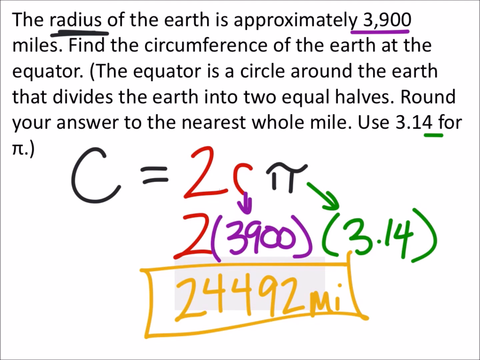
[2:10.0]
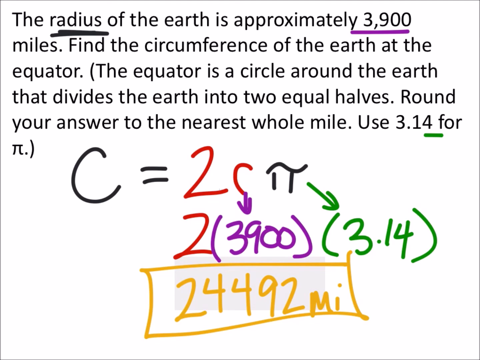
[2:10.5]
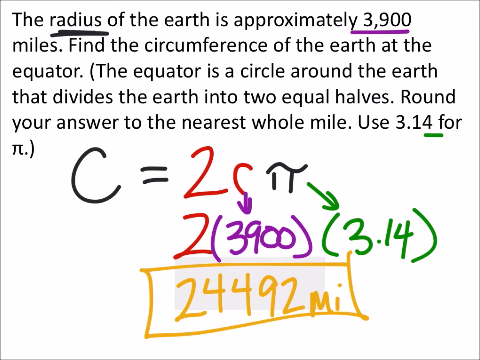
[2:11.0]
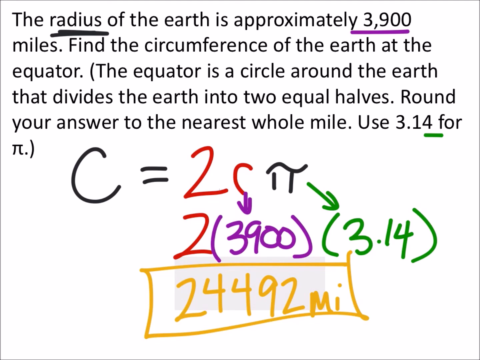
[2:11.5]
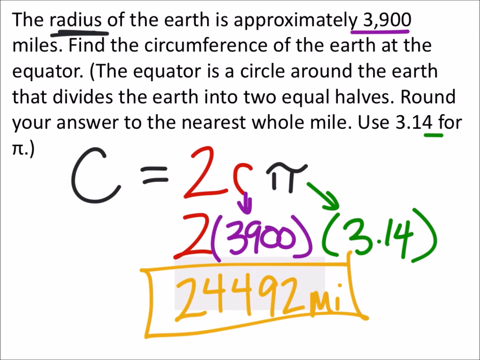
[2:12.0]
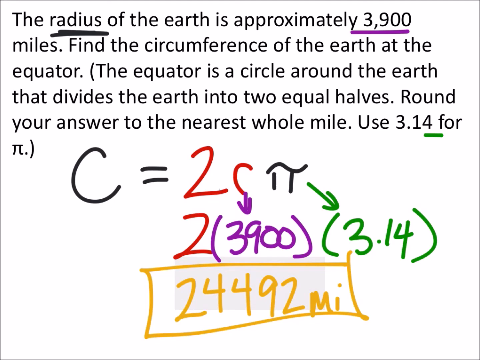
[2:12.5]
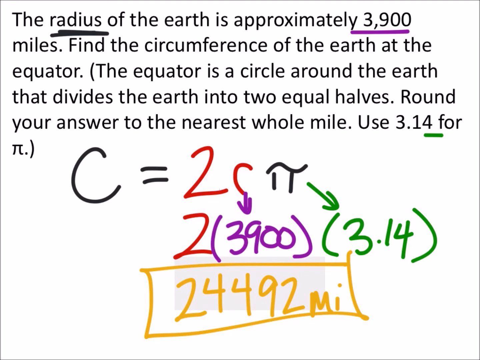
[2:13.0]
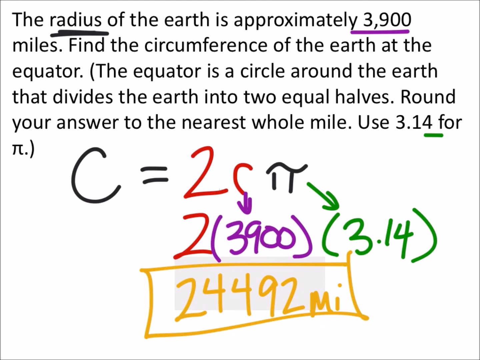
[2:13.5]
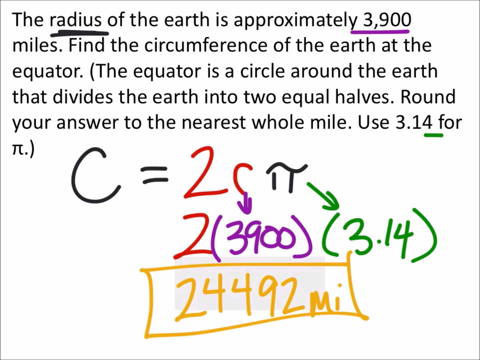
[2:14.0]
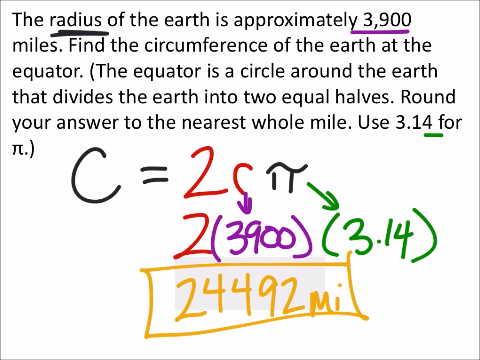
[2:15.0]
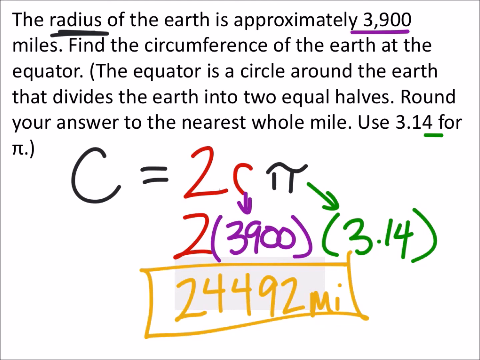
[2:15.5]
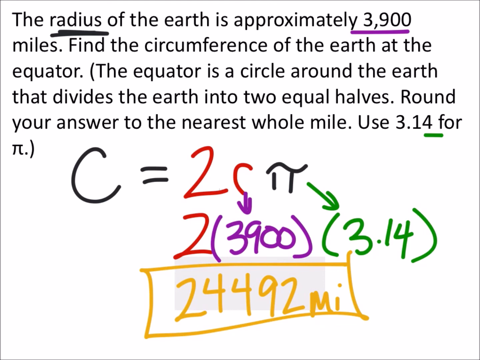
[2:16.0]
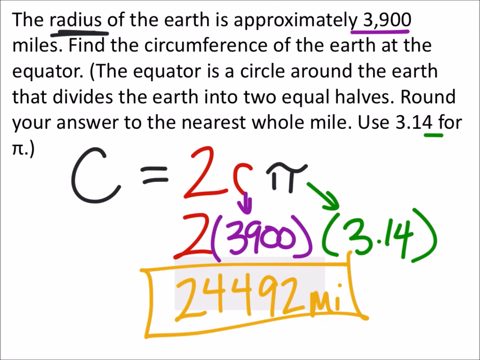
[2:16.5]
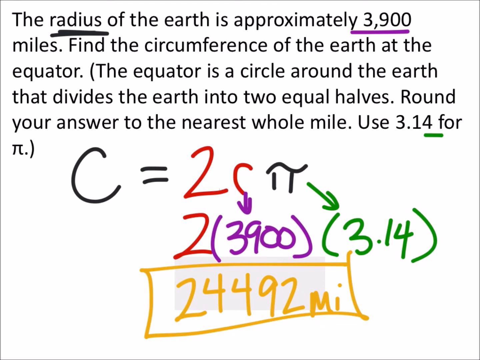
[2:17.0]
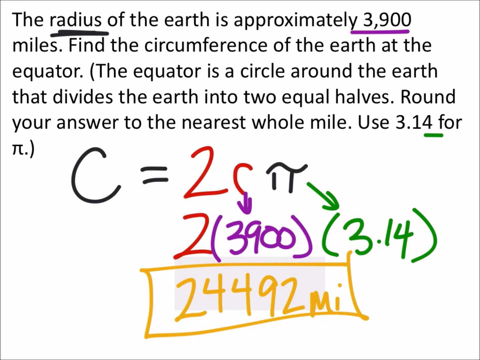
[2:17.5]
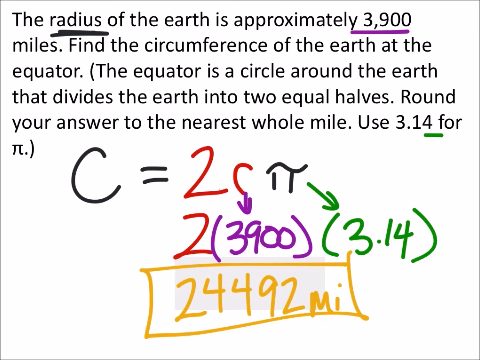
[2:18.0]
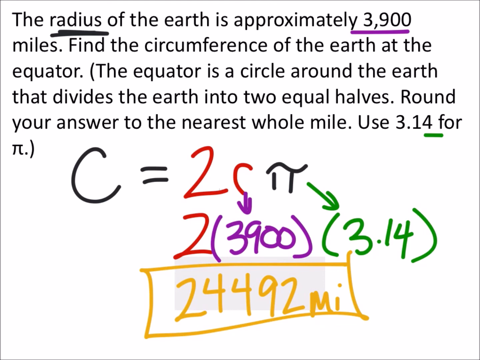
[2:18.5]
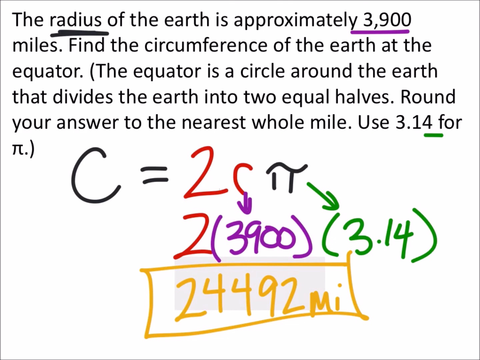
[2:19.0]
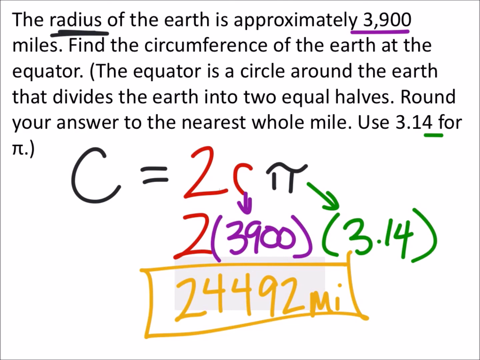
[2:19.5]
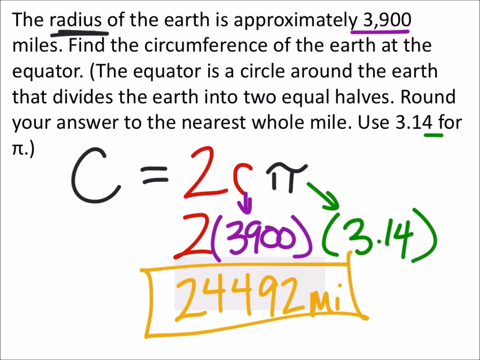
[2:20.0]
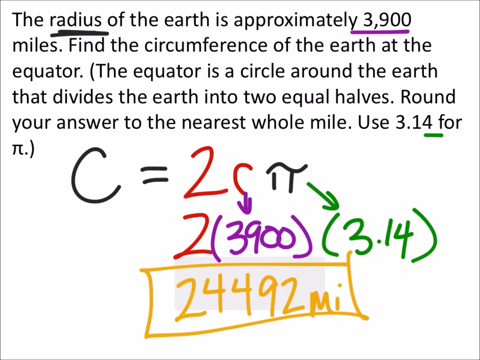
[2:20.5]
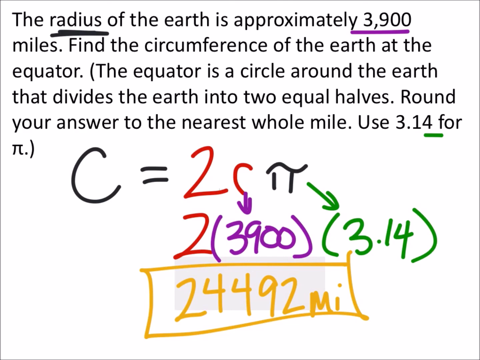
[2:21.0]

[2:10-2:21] A problem given to a student, possibly in an online class, is shown; no class, student name or school is shown. It reads: "The radius of the Earth is approximately 3,900 miles. Find the circumference of the Earth at the equator. (The equator is a circle around the Earth that divides the Earth into two equal halves.) Round your answer to the nearest whole mile. Use 3.14 for pi." The word radius and 3,900 are underlined. Below, the problem is written out as c equals 2c pi, and the answer at the bottom is 24,492 miles in yellow text, also outlined in yellow.